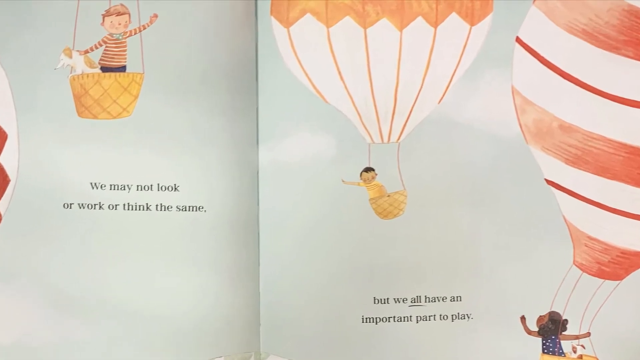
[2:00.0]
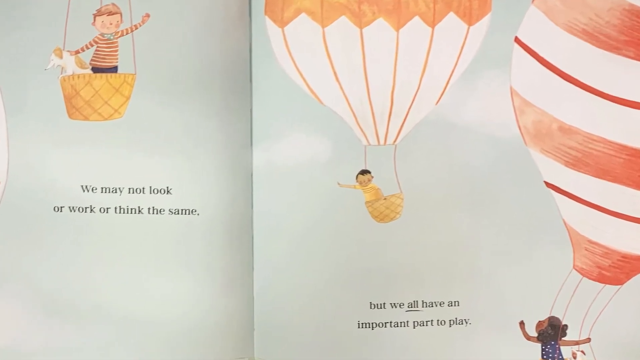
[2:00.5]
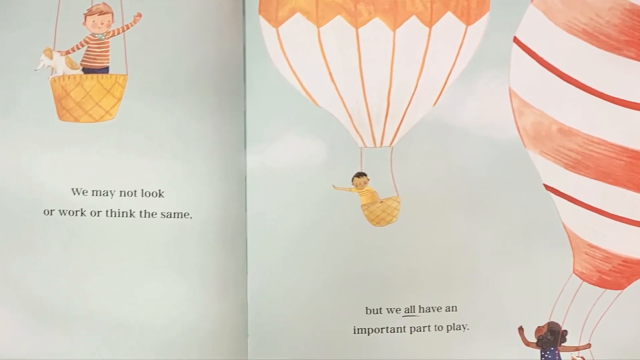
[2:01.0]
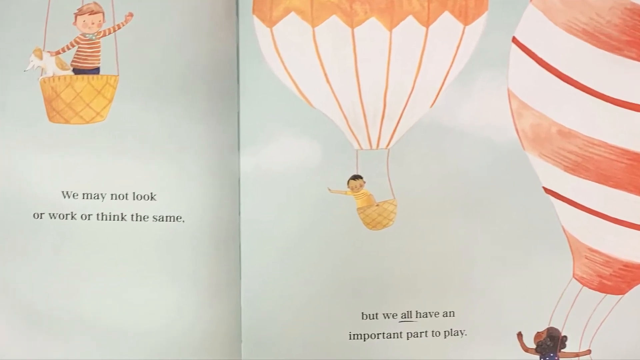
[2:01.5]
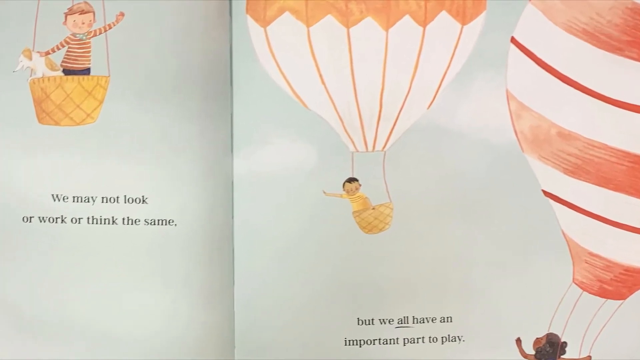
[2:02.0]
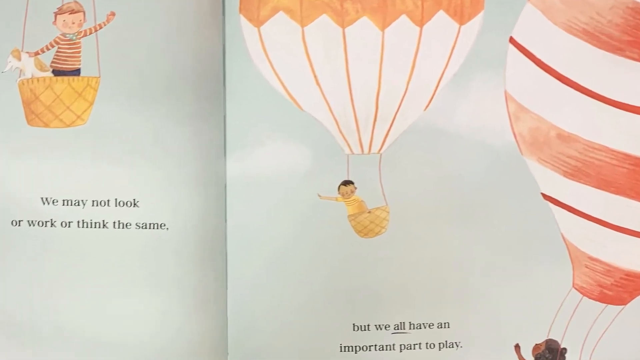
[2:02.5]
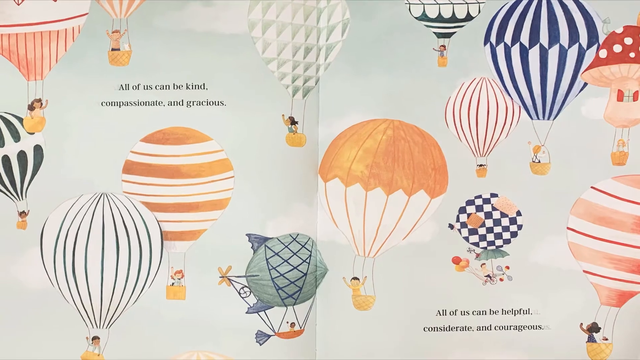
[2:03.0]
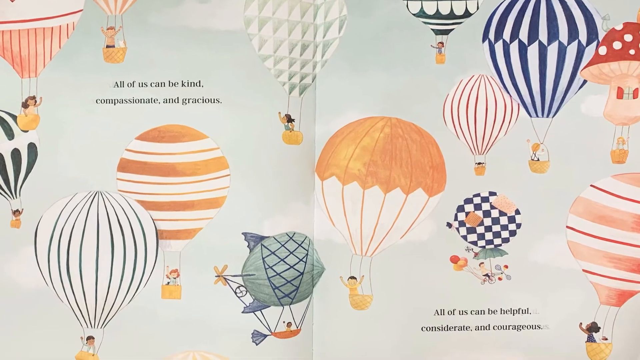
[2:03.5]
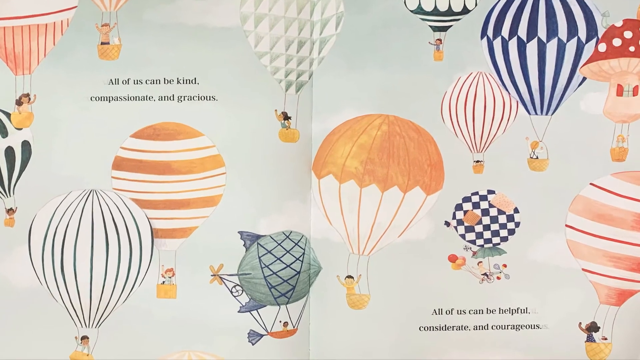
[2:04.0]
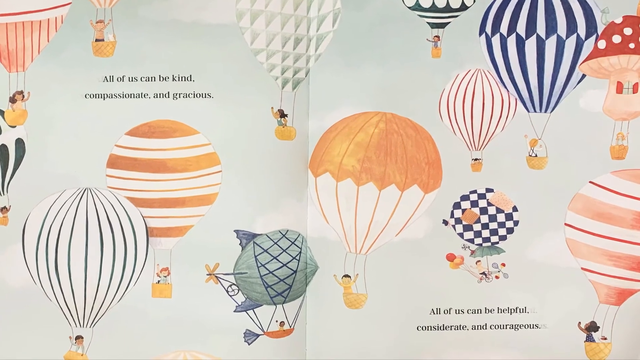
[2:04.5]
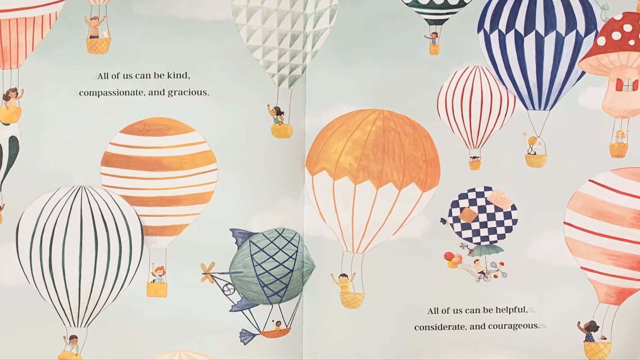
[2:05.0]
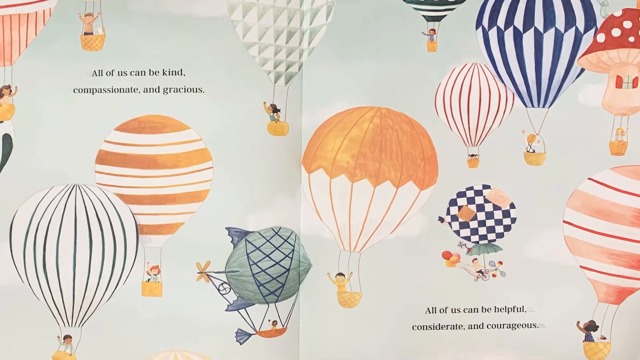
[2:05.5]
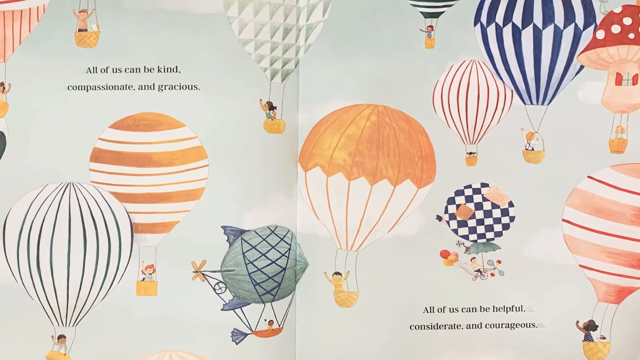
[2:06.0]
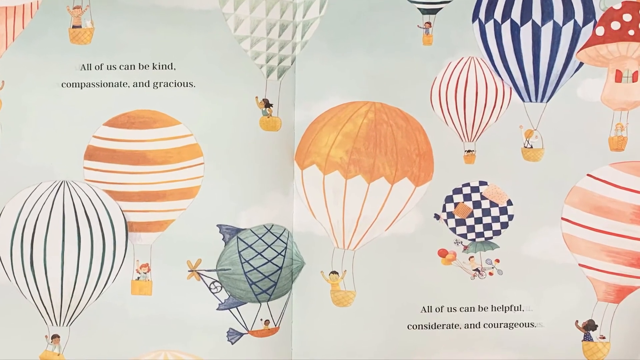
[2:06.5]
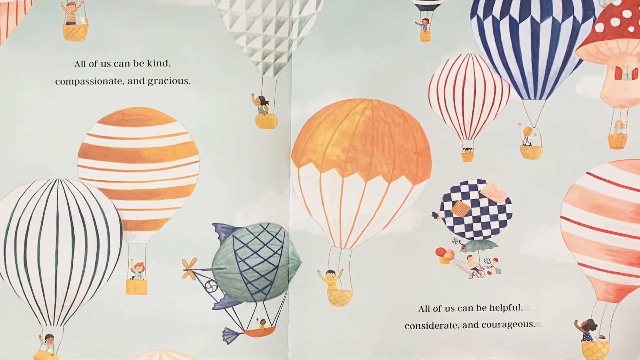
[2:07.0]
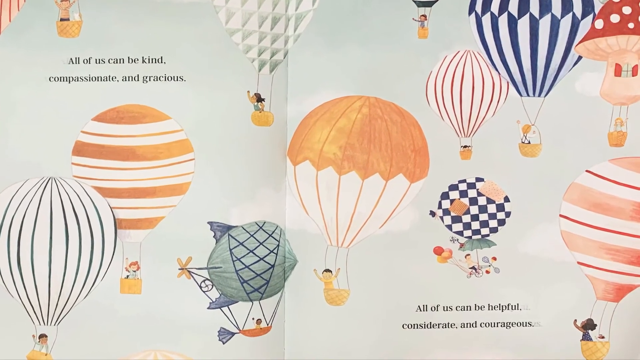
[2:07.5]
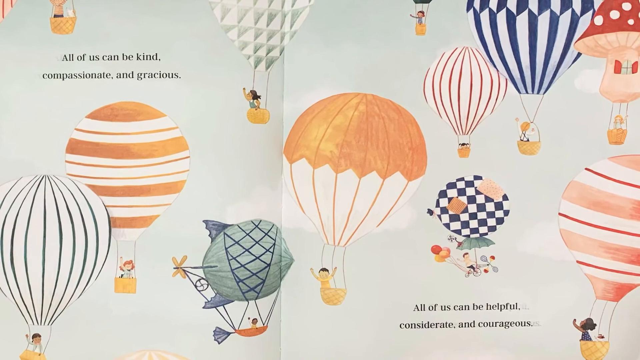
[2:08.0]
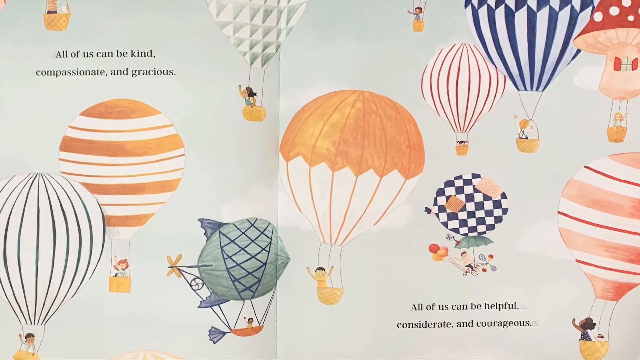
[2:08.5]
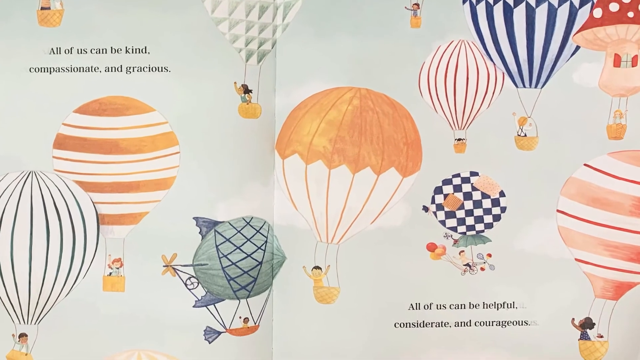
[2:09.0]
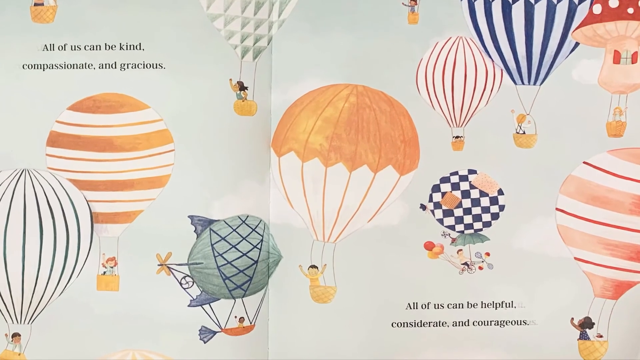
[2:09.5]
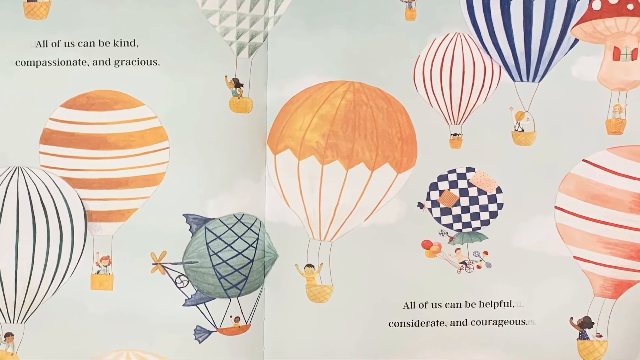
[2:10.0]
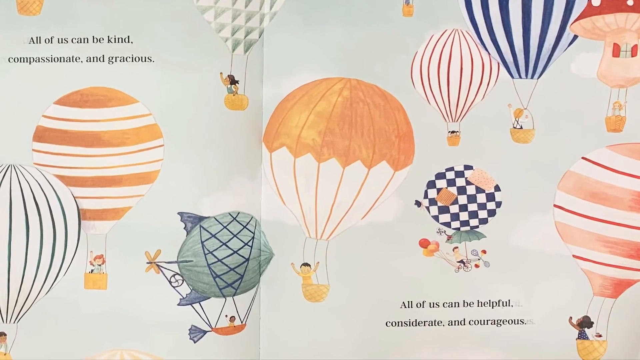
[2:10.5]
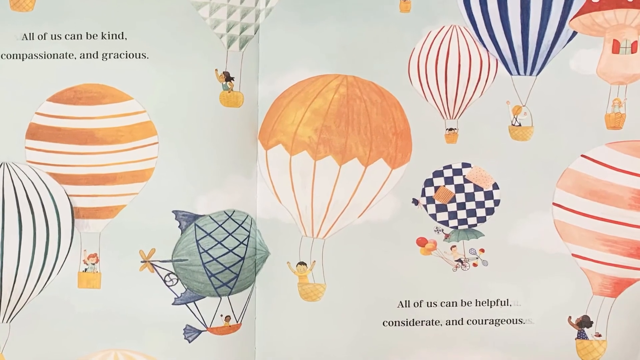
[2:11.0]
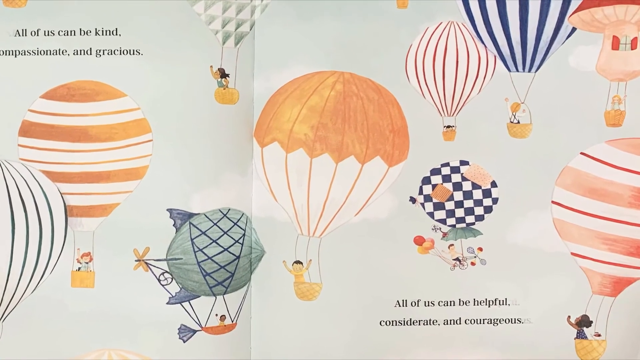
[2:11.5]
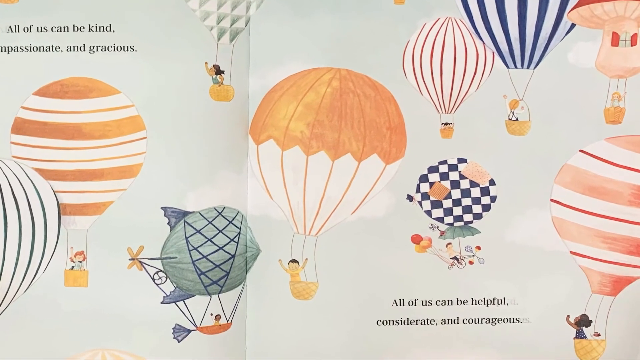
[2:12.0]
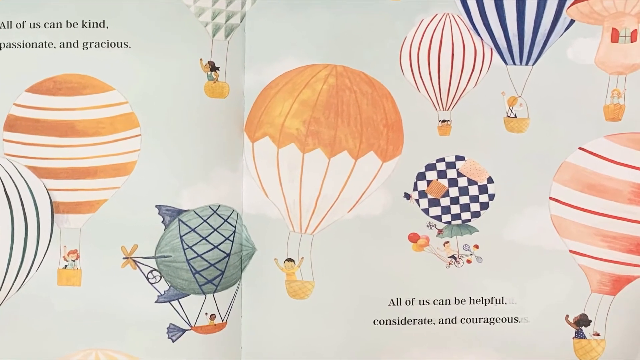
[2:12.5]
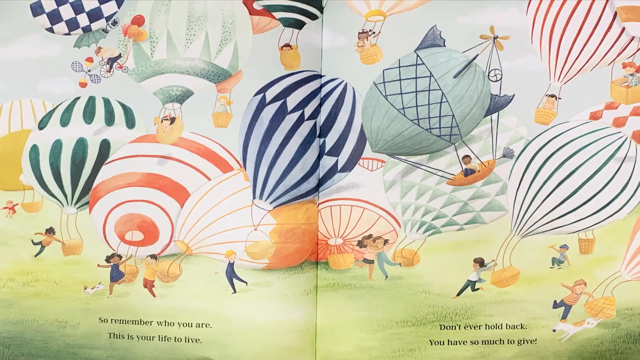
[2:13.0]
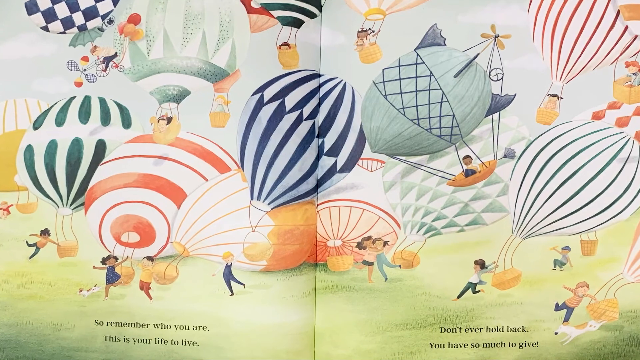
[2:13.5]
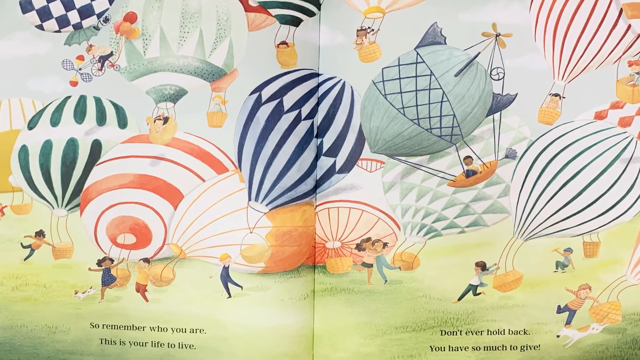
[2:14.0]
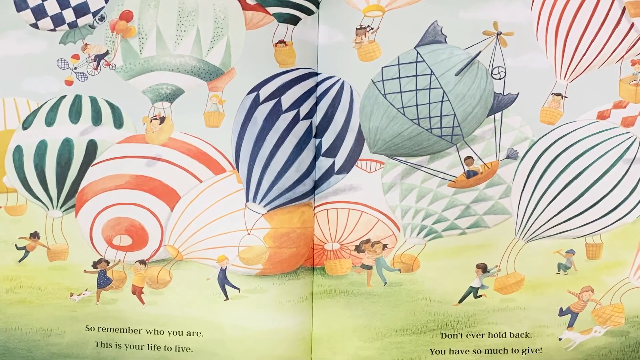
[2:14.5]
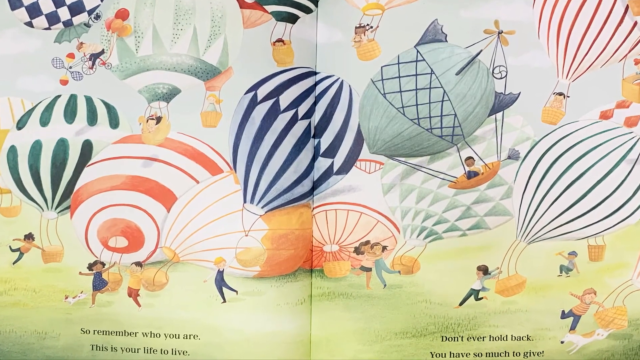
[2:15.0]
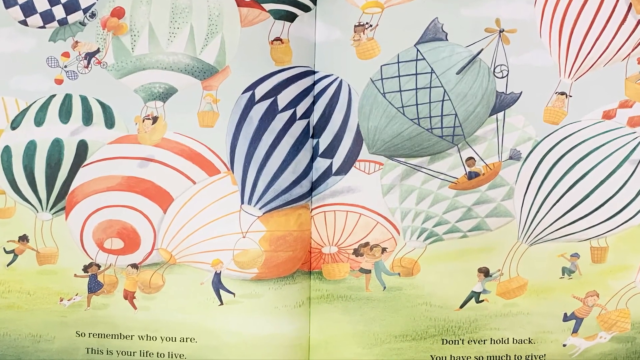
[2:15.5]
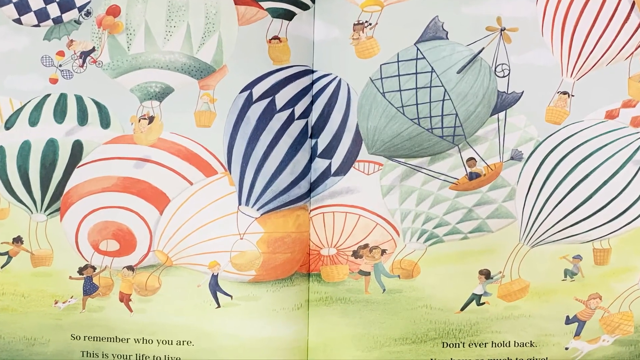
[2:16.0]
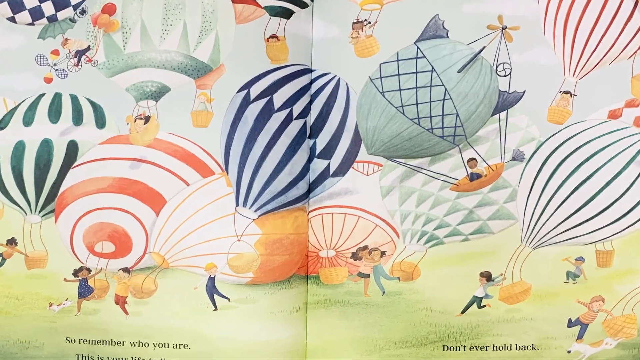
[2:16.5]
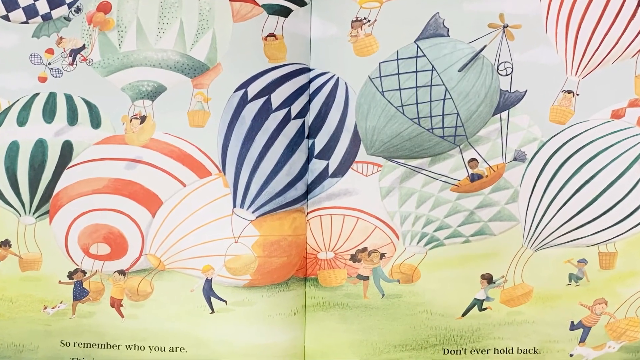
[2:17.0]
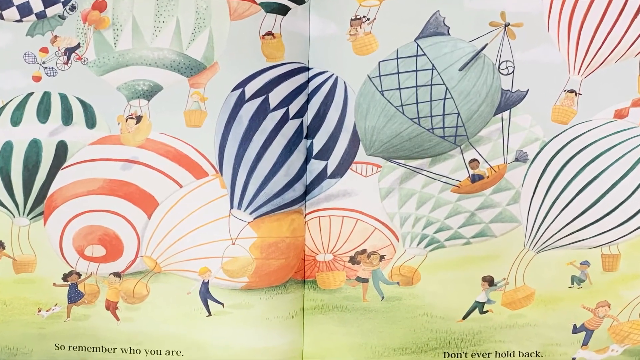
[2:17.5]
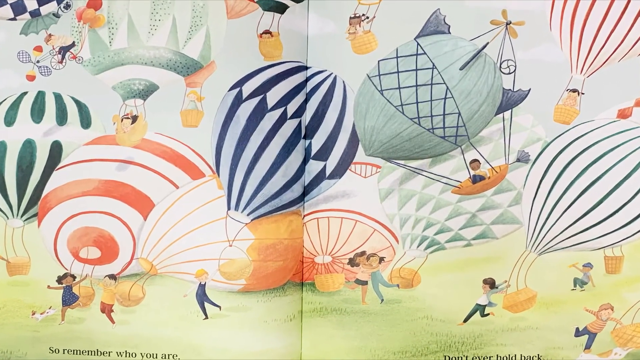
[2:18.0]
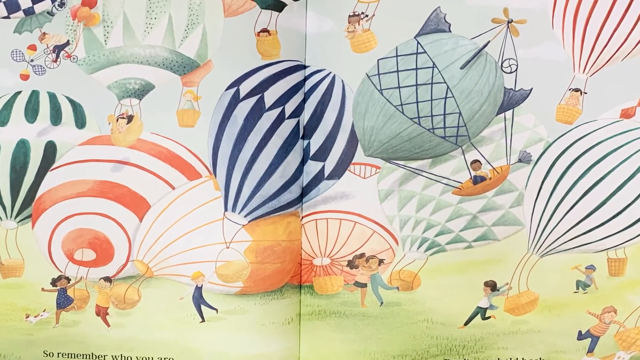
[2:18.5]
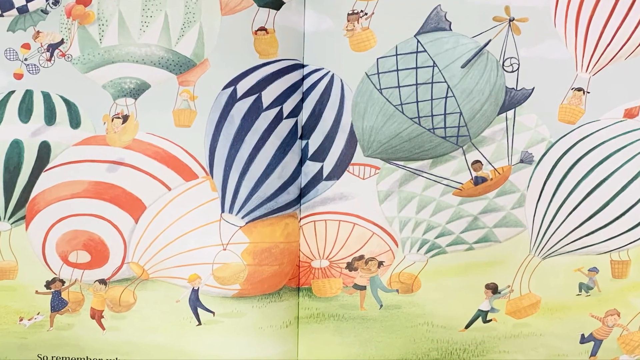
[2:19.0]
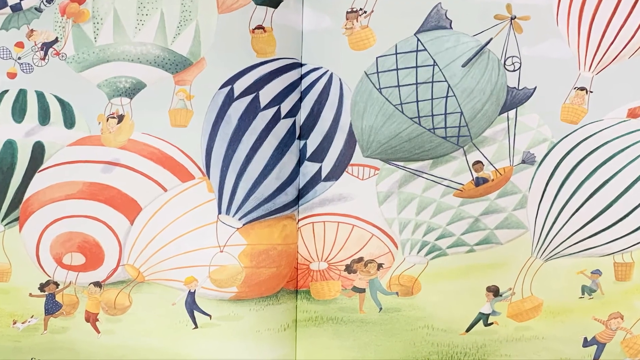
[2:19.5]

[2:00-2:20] The storybook is open on a spread. The left-hand page reads "we may not look or work or think the same" and shows a child with ginger hair, wearing a stripy jumper, in a hot air balloon basket with a little dog leaning out. On the right-hand side are various other children, one in a sort of orangey hot air balloon and another in a red striped one, and at the bottom the text says "but we all have an important part to play", with "all" underlined. The view slowly zooms in on the pages. When the page turns, the left side says "all of us can be kind, compassionate and gracious" and the right side says "all of us can be helpful, considerate and courageous", with lots of different hot air balloons: some orange with stripes on a white background, some white with vertical black stripes, some shaped like a fish with lots of strings coming down to the basket, possibly one with lots of green triangles, one with red vertical stripes, one with blue and white vertical stripes, one mushroom-shaped, and one with a bicycle attached to an umbrella that is attached to a big balloon. The next page shows lots of hot air balloons landing. It looks a little chaotic, though it seems meant to be a safe, calm and happy scene. Children jump jubilantly, hug each other and look excited after their ride, while some balloons are still in the air, floating down towards the ground.